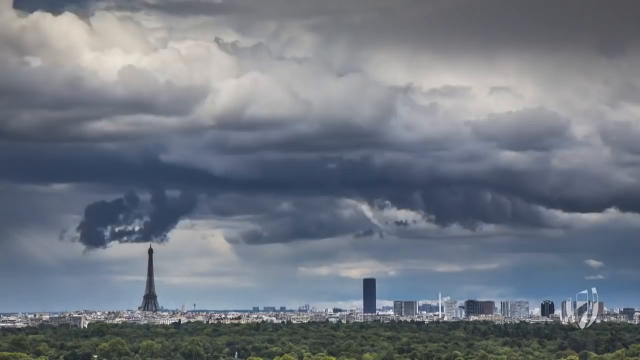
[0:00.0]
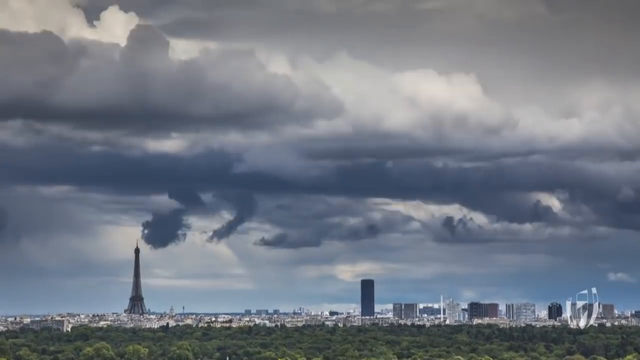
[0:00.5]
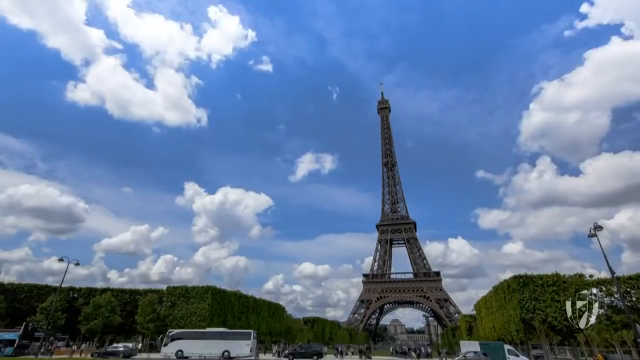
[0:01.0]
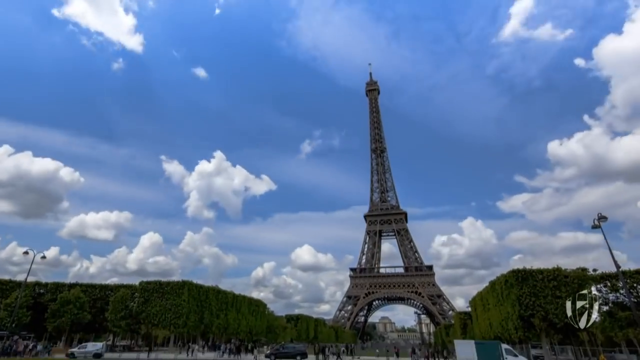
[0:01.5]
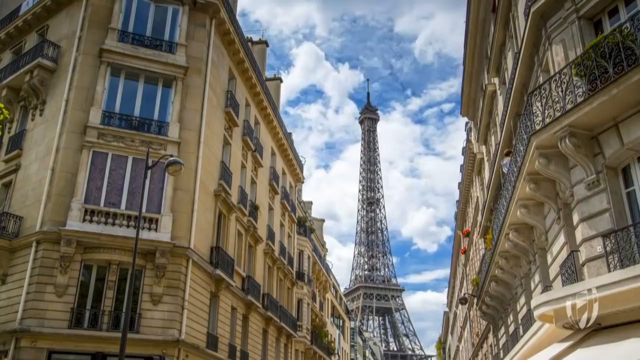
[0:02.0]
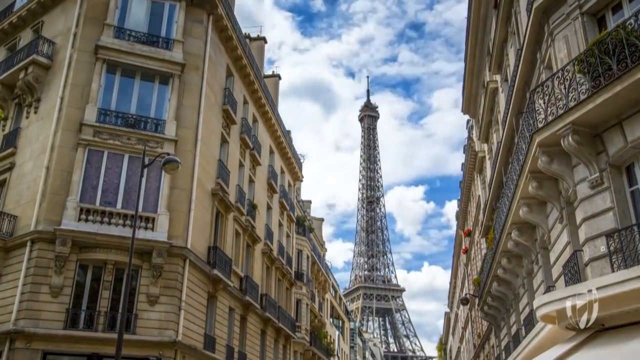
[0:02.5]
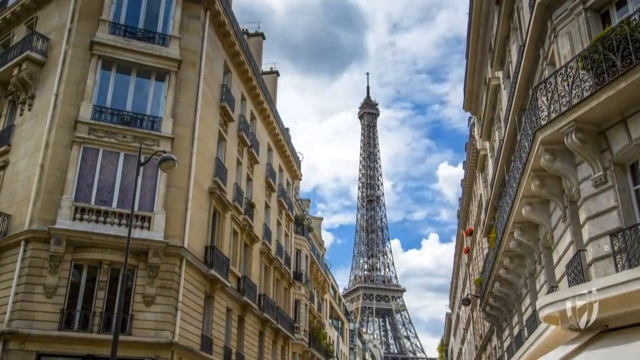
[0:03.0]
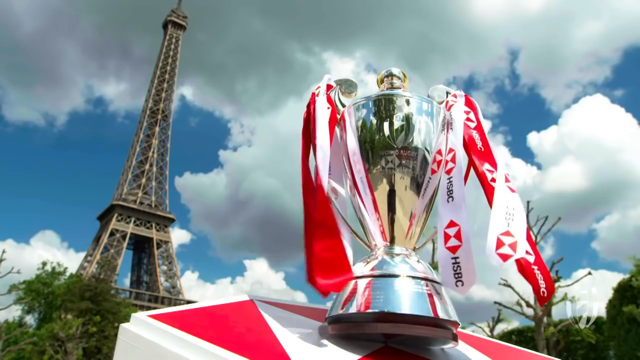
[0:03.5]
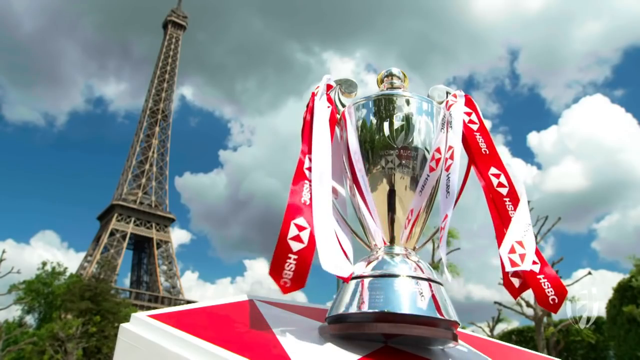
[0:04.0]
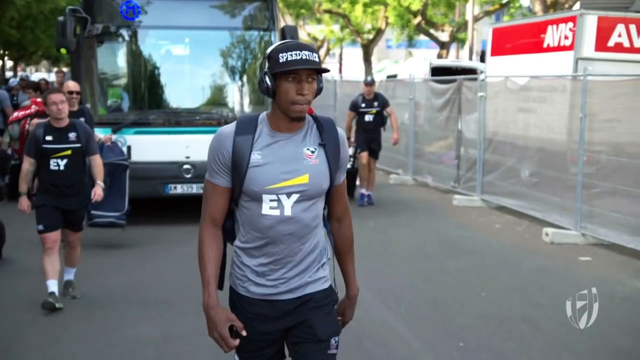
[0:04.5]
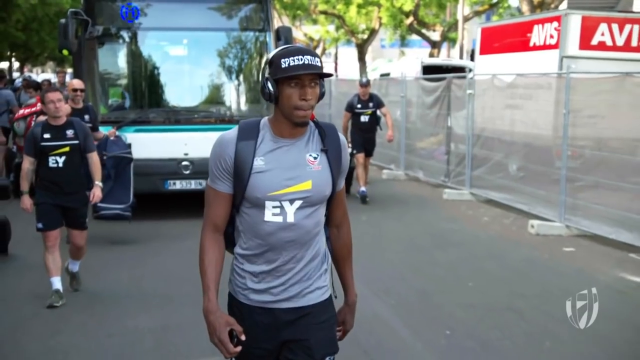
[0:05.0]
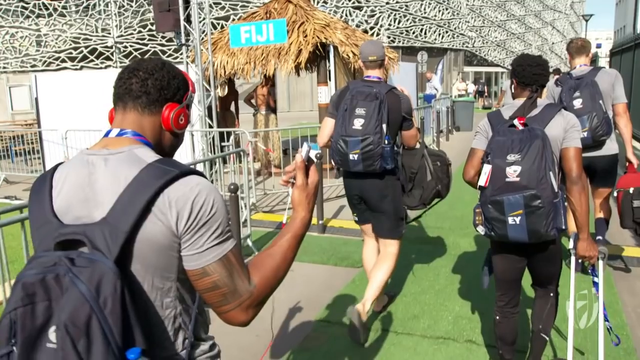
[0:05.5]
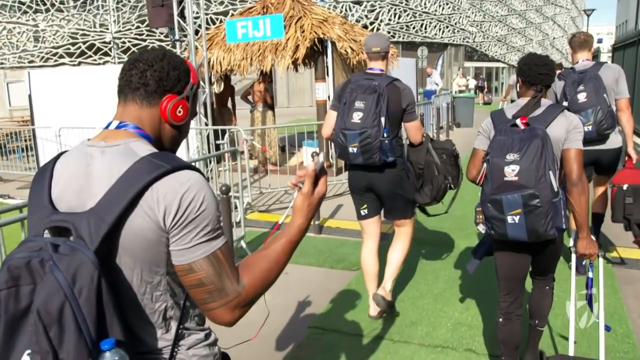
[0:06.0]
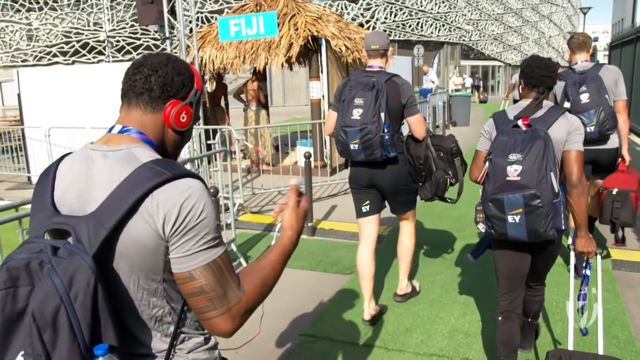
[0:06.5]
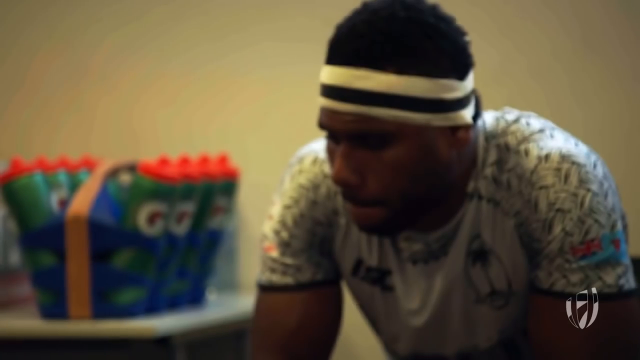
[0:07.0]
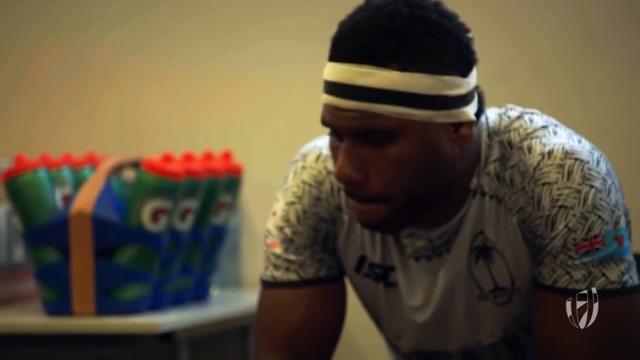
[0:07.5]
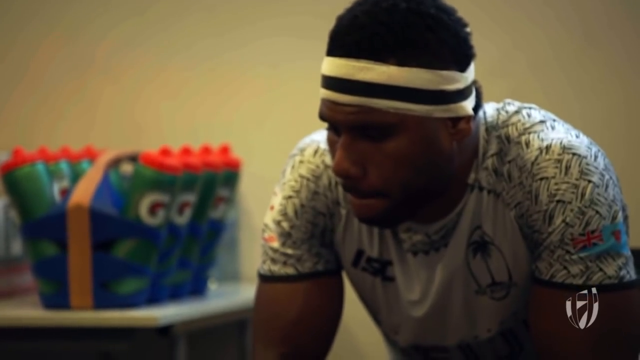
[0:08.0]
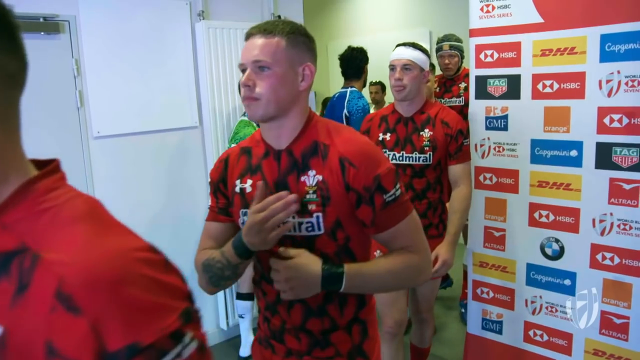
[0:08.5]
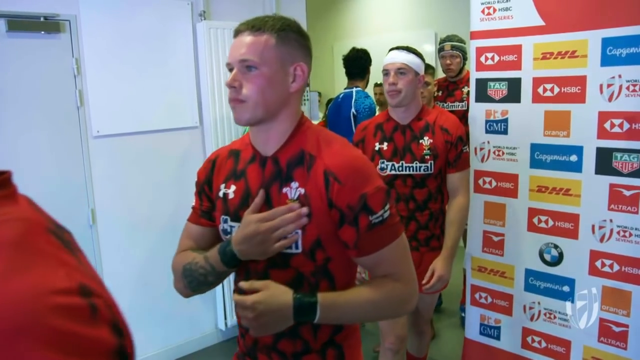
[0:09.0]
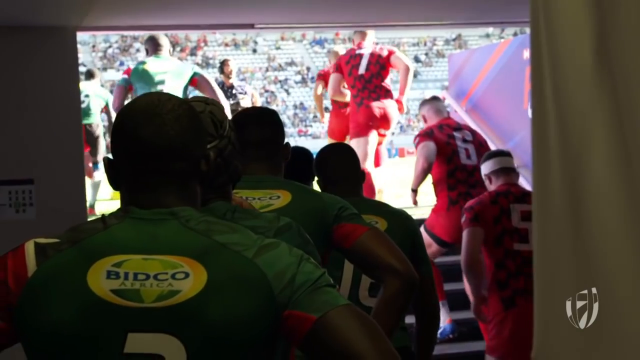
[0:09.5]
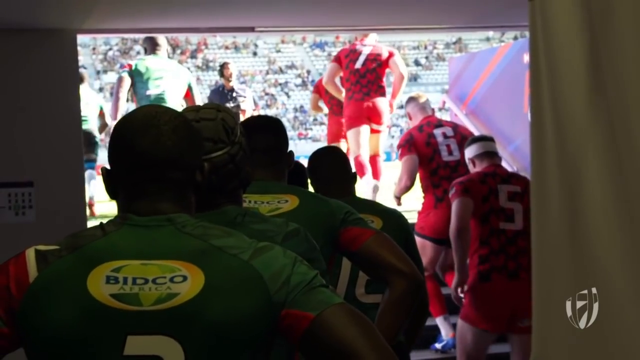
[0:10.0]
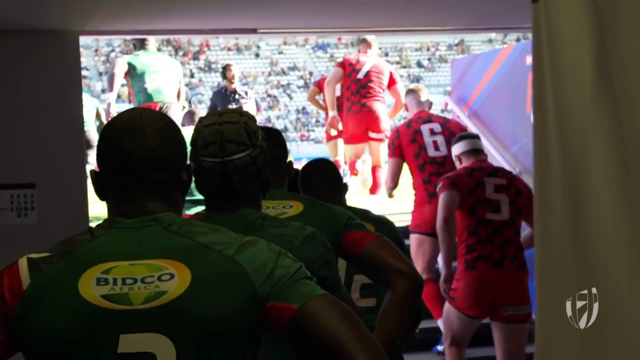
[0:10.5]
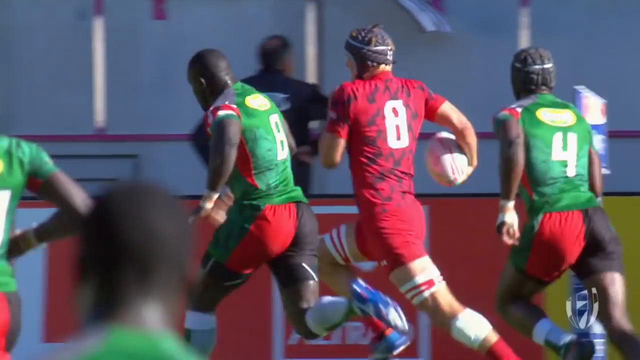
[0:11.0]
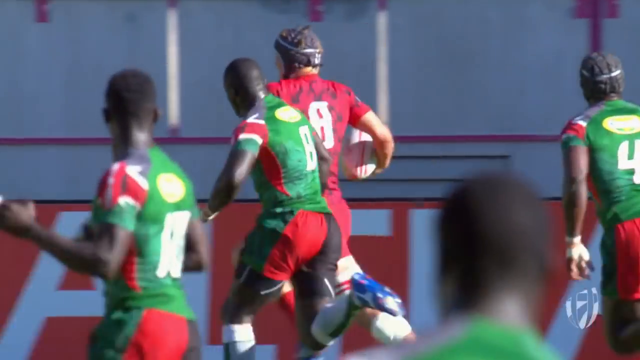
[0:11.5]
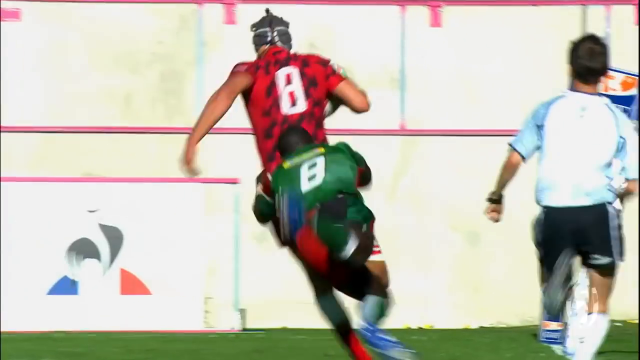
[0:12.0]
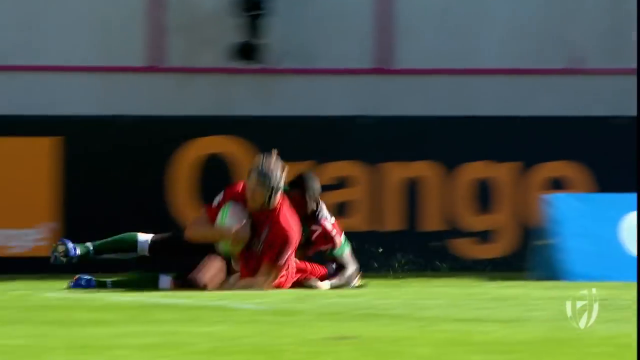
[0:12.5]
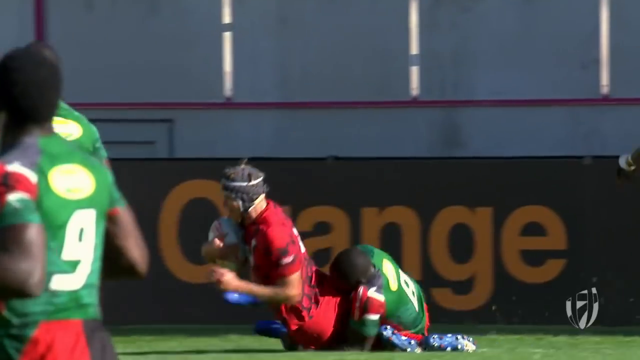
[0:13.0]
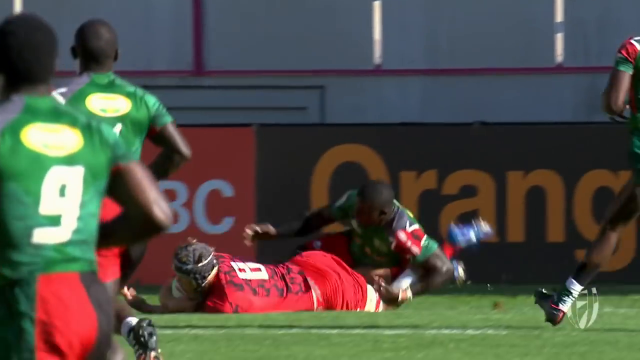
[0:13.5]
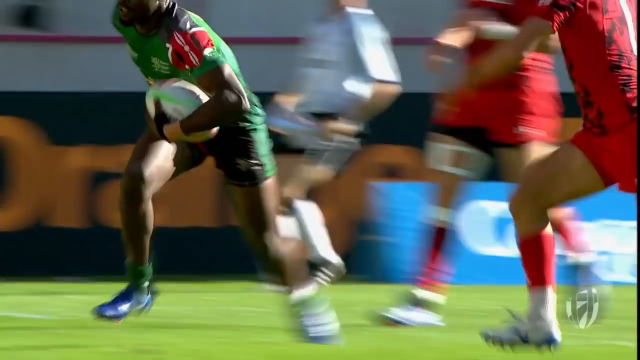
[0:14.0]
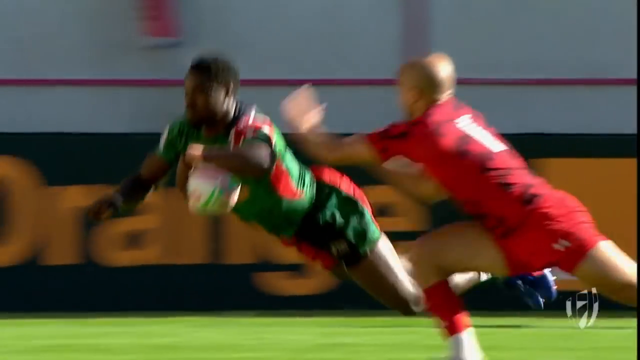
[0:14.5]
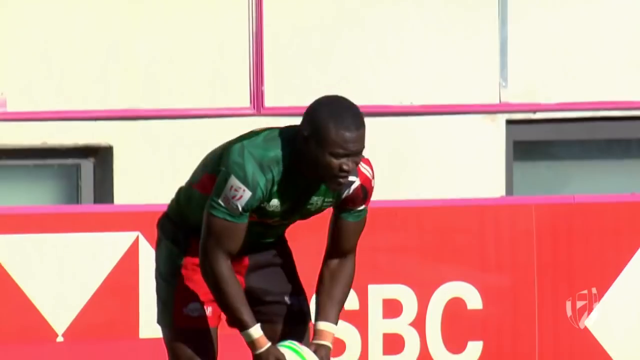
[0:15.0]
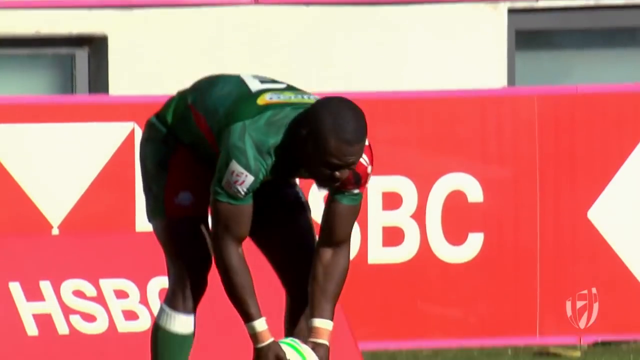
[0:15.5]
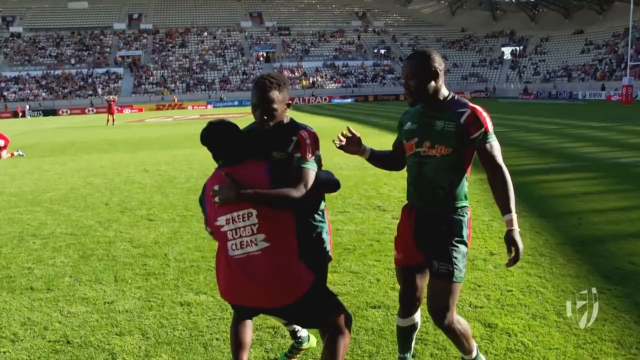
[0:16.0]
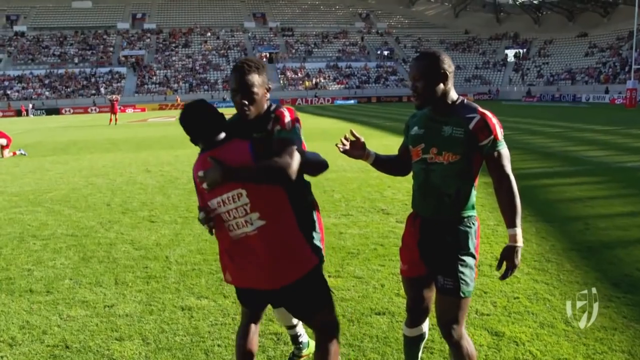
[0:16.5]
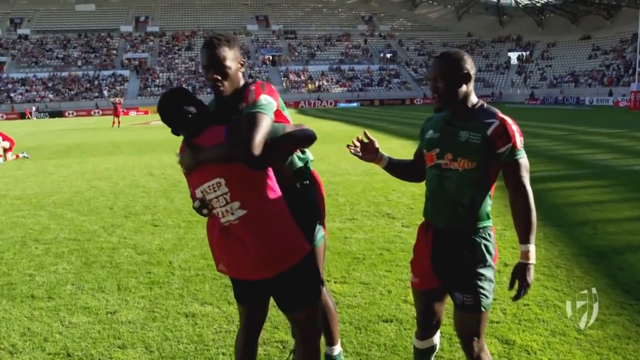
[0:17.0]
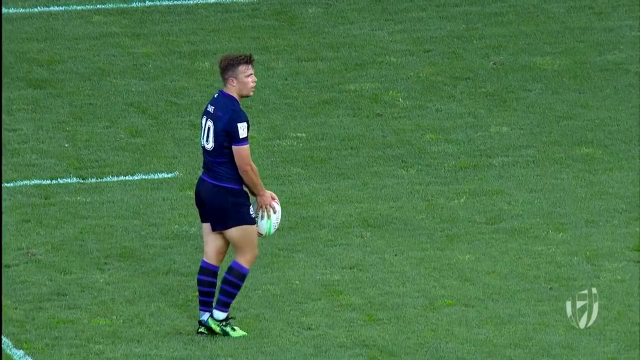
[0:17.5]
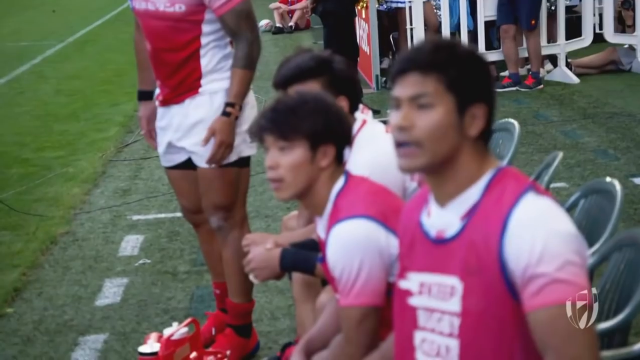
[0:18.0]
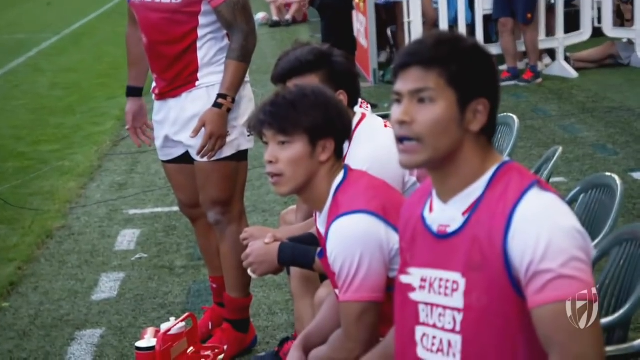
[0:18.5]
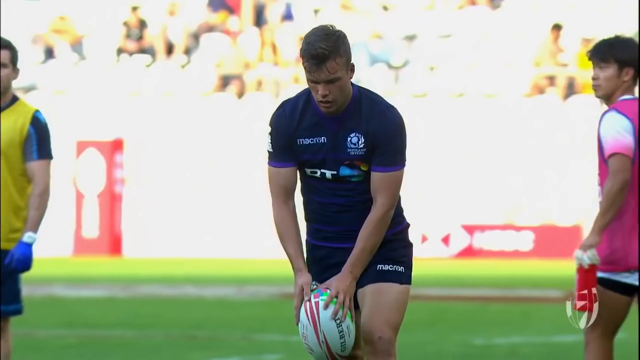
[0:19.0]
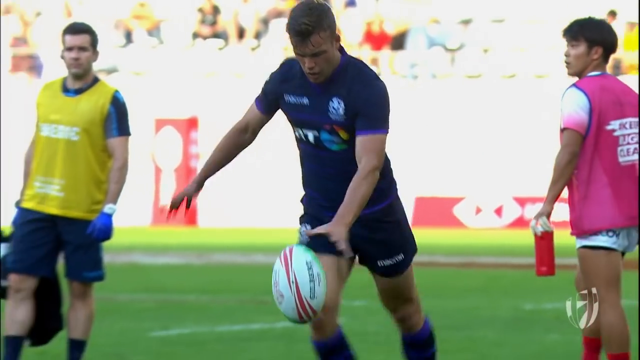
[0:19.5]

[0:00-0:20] Fast-moving clouds fill a gray, cloudy sky over Paris, with the Eiffel Tower very small on the left side in the background. A view of the same scene under a bluer sky follows, closer to the Eiffel Tower, with very fast-moving clouds, and then another view of the Eiffel Tower between two buildings, as if from the street, still with fast-moving clouds. A calmer shot without fast-moving clouds shows the Eiffel Tower with a silver trophy to the right of it; red and white ribbons with logos kind of come out of the trophy and move softly in the breeze, with lots of clouds in the background. A close-up shows athletes who look like they have just gotten off a bus: one man comes toward the camera in a gray short-sleeve t-shirt and a black baseball hat with white writing on it, with others in black behind him. A back view shows four other athletes, all wearing black backpacks, some with headphones, as if getting ready for a race or something. A close-up shows a man sitting down with a white headband, leaning forward a little, wearing a white and black jersey, with green and orange Gatorade bottles out of focus to the left. A team dressed in red and black uniforms appears to be walking out of a doorway, followed by a back view of a bunch of the red team and then a green team, walking out of the tunnel from underneath the stadium into the sunlight of the stadium. Live game shots show the two teams playing rugby against each other, with lots of action across what looks like about eight different shots of game action.